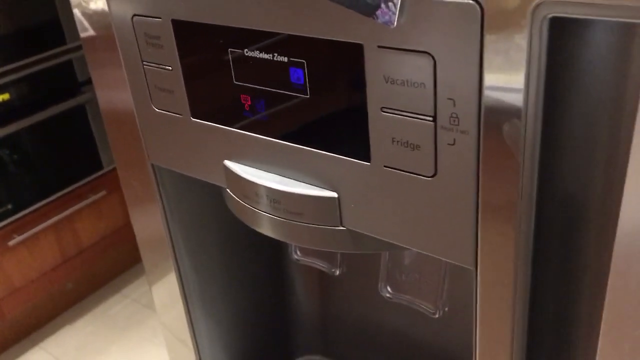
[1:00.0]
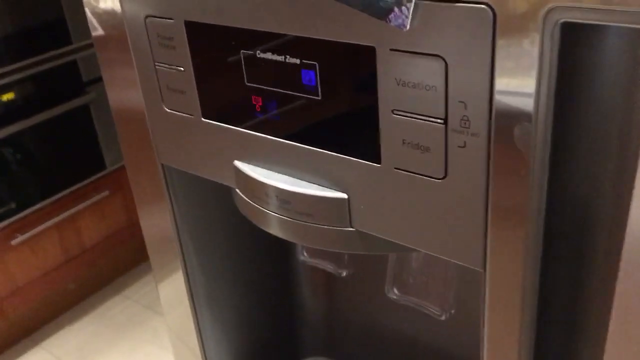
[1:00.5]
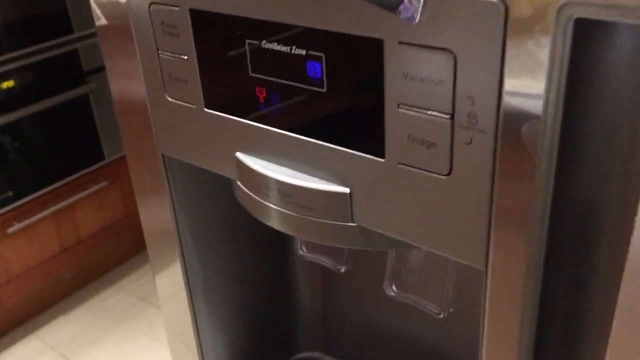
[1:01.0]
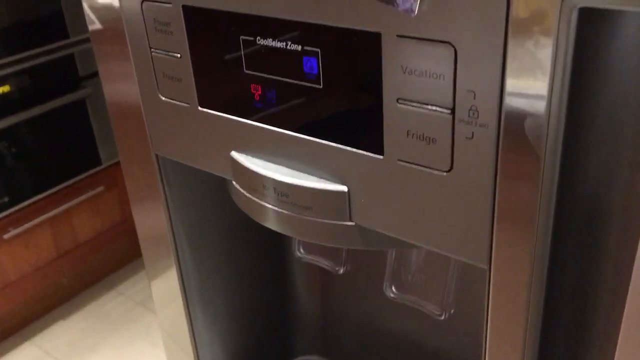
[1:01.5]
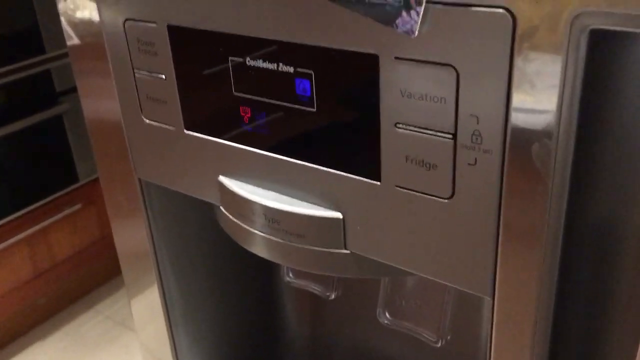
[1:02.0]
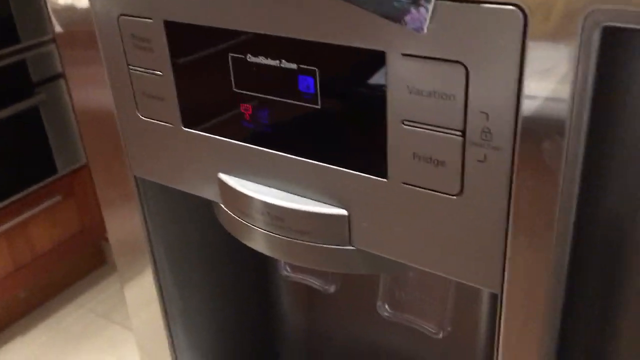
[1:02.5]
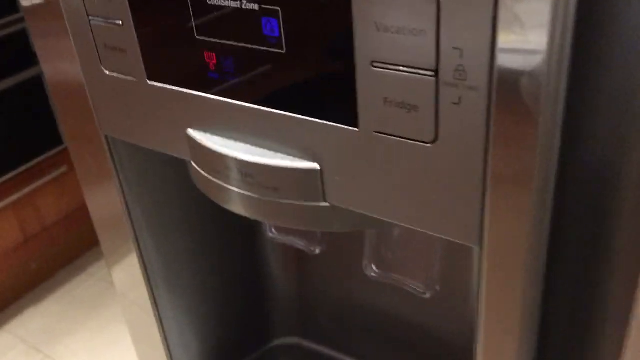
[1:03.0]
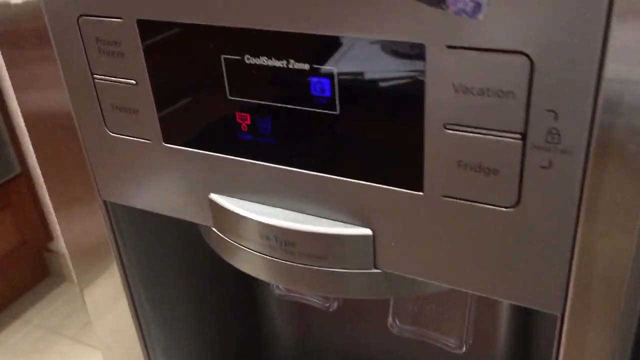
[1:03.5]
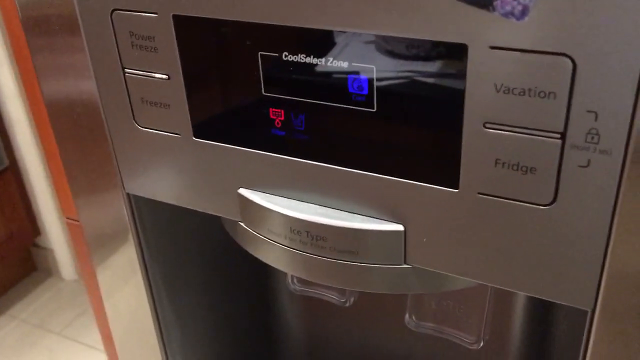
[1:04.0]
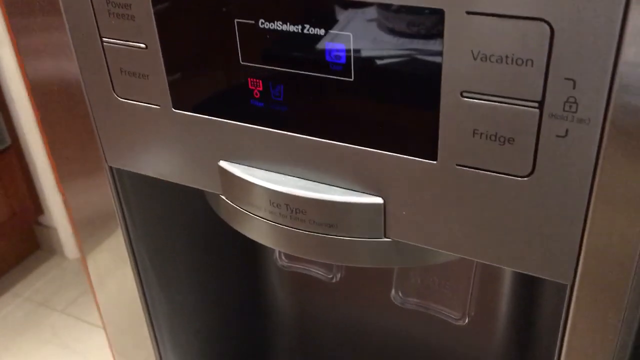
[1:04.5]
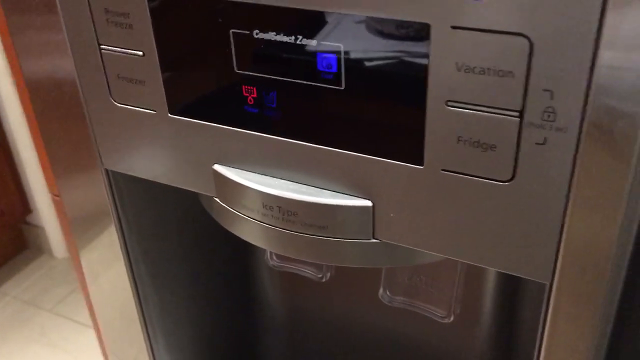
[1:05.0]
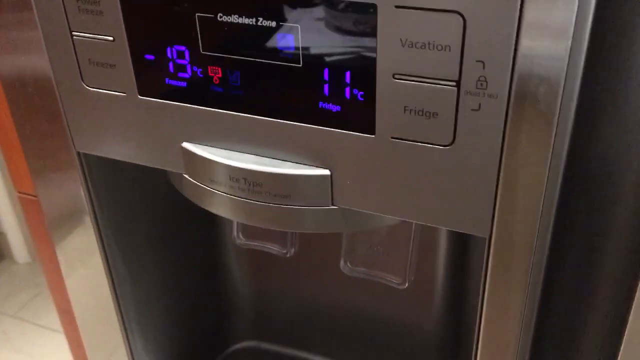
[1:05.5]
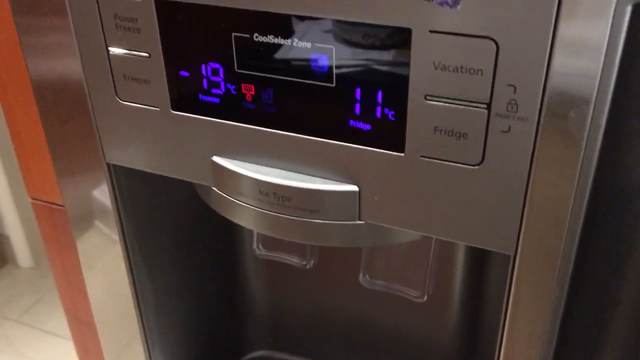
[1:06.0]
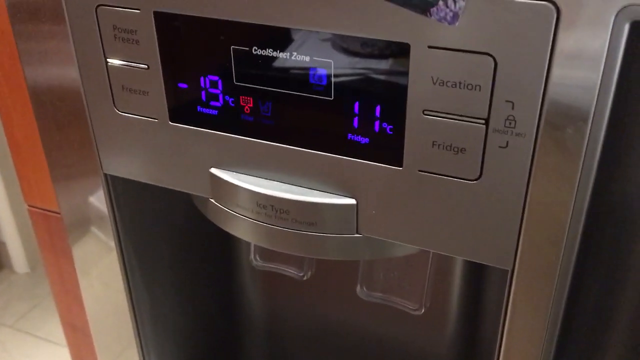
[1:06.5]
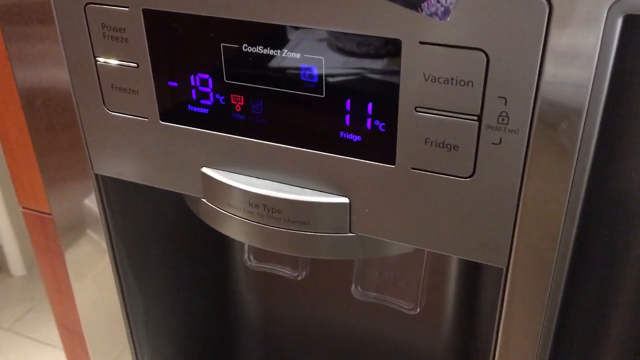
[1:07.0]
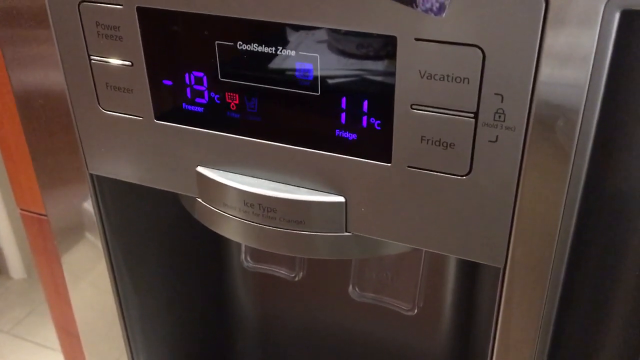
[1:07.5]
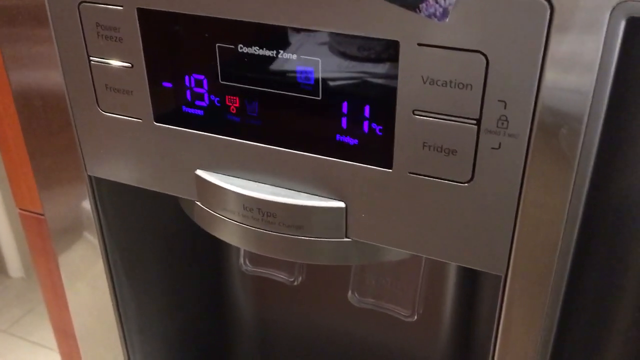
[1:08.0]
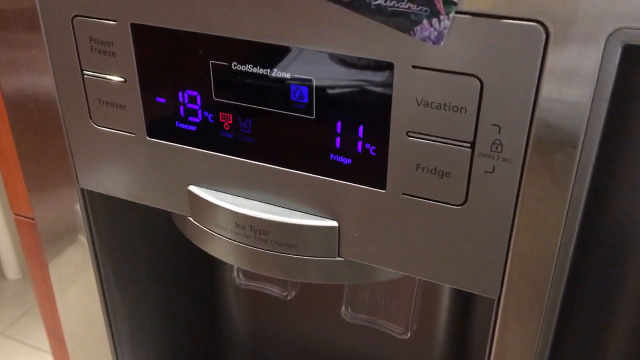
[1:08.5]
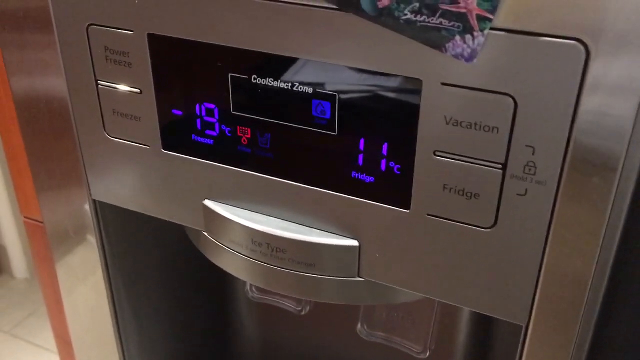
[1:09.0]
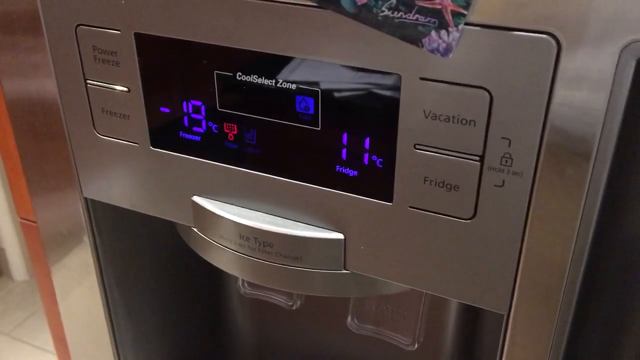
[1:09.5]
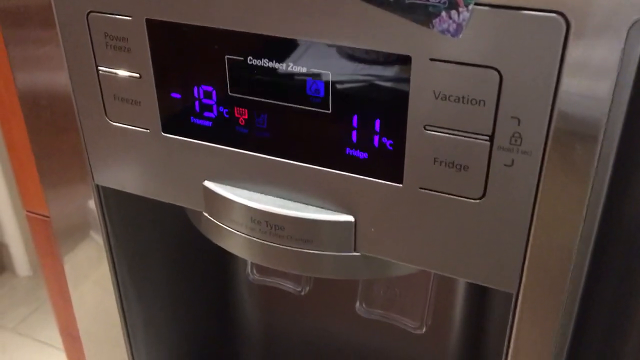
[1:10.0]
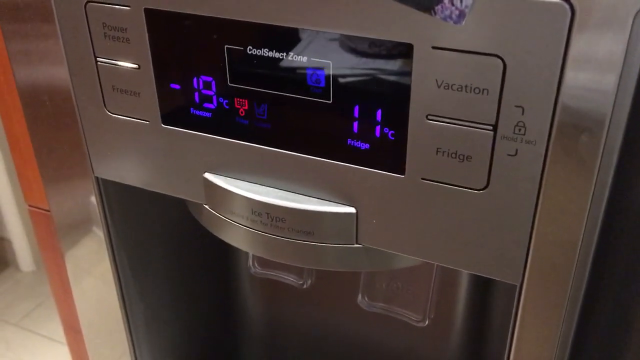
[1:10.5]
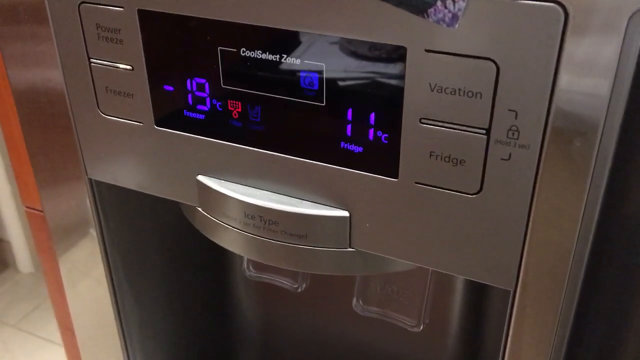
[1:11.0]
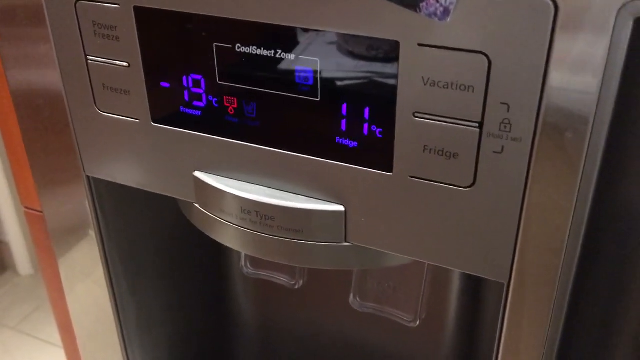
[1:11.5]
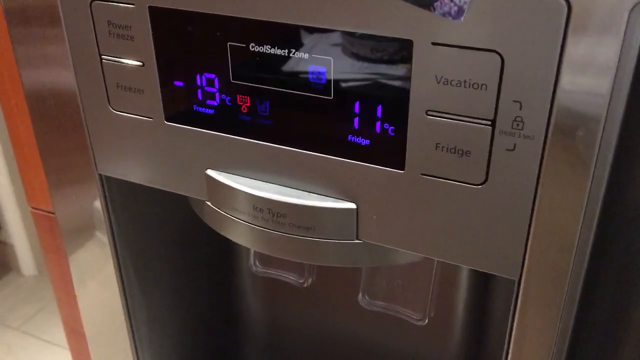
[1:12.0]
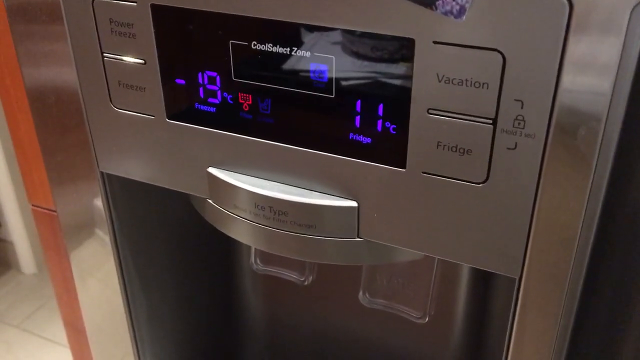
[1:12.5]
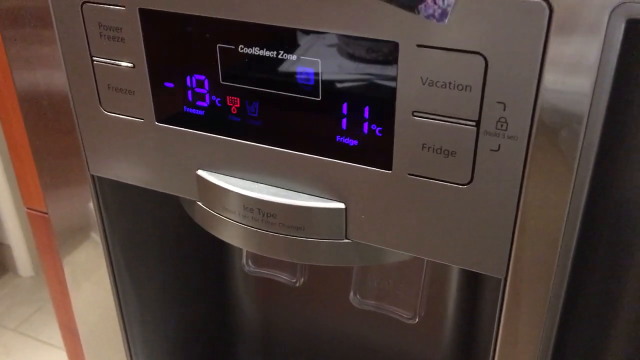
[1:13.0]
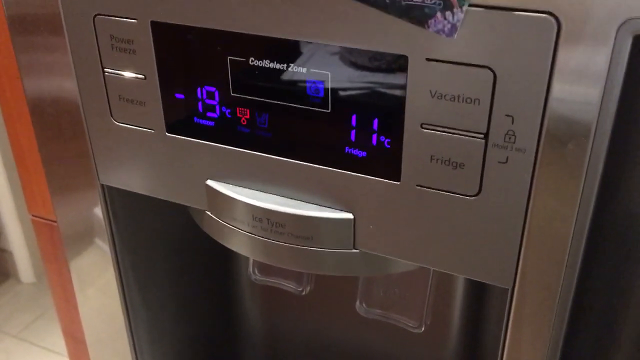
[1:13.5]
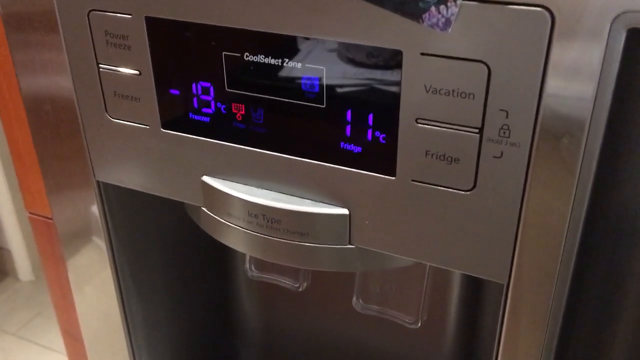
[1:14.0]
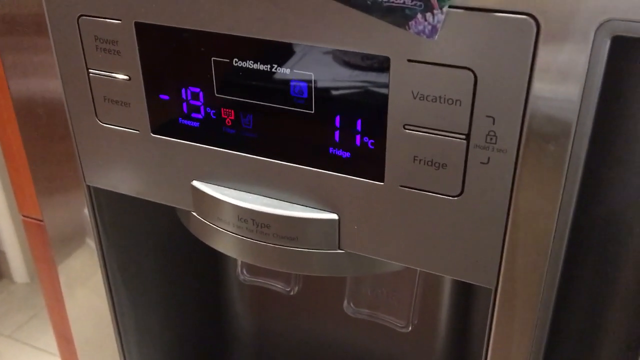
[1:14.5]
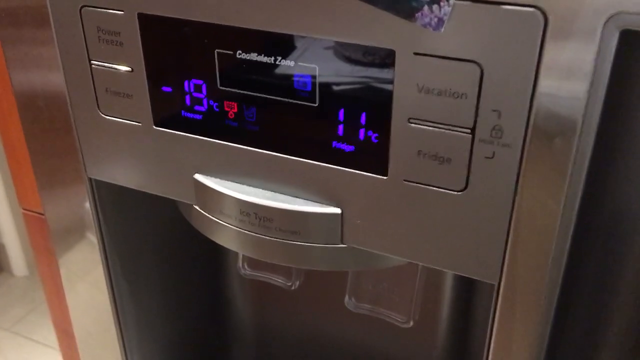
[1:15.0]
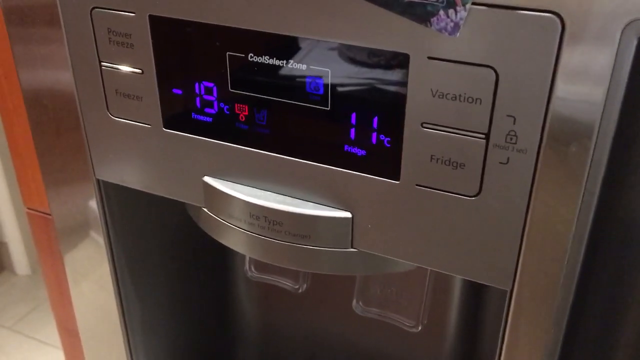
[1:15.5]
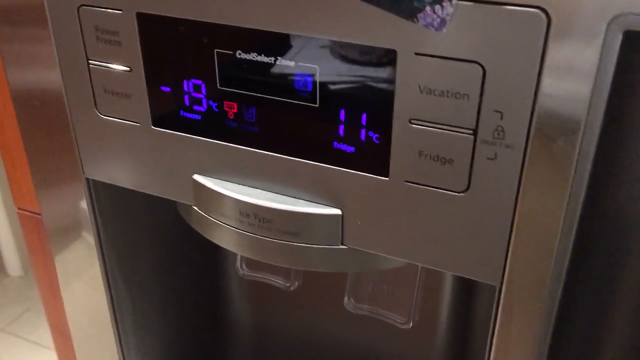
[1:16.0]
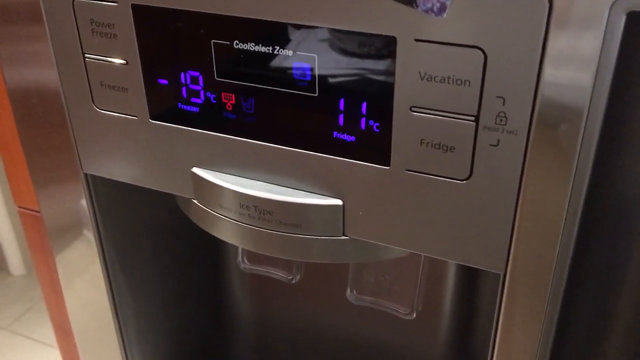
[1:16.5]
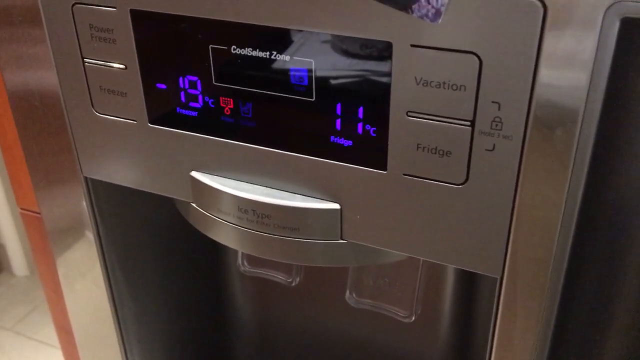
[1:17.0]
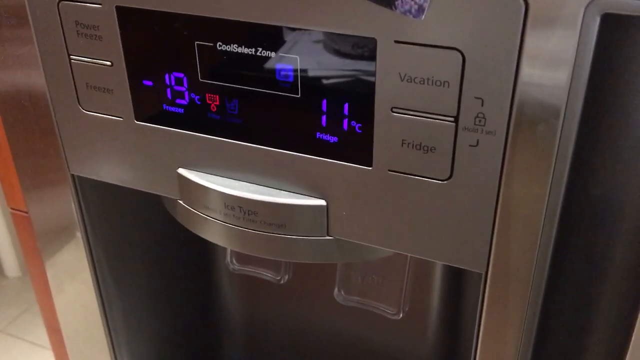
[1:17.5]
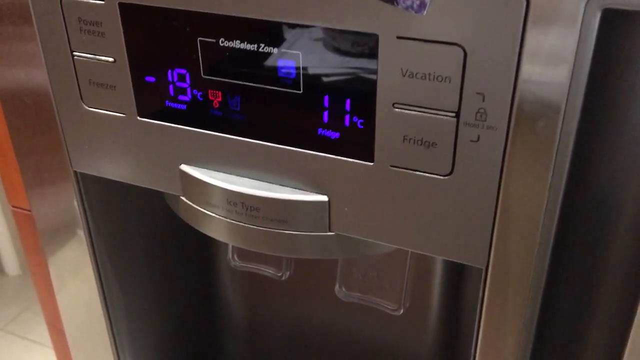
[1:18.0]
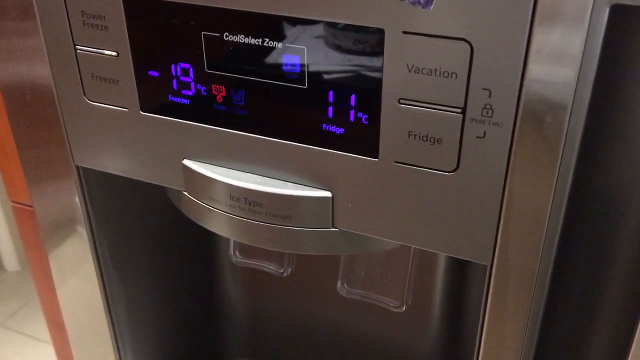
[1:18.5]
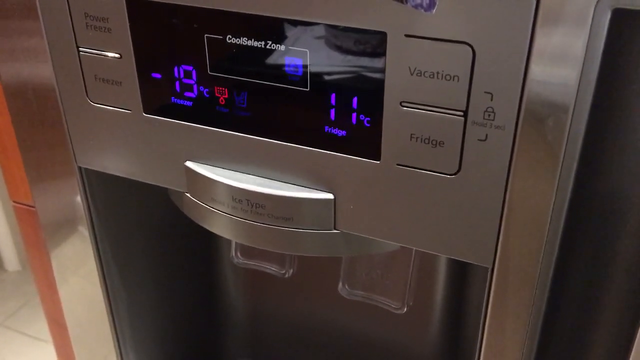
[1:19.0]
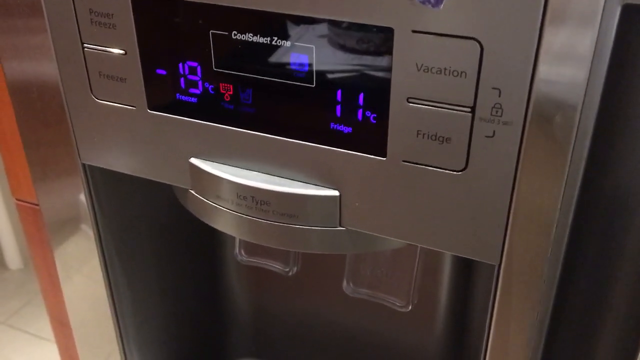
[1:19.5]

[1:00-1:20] In a slightly wide frame, the left-hand side of a two-door fridge is in the very center. On it is an ice maker with a left and right side, likely for ice and water, and four buttons right above it. Between the buttons, two on each side, is a black display that says "comfort zone" in the middle. The display lights then turn on, reading negative 19 Celsius on the left and 11 degrees Celsius on the right, for the freezer and fridge respectively. The camera keeps bouncing up and down as if someone is trying to stabilize it, but seems to be shaking a bit. In the distance on the left is a window that appears to be partially open; it appears to be night outside, as it is very black. The sill around the window is white, and the base at the bottom of the window appears to be wood, brown in color. The floor right below the window appears to be off-white.